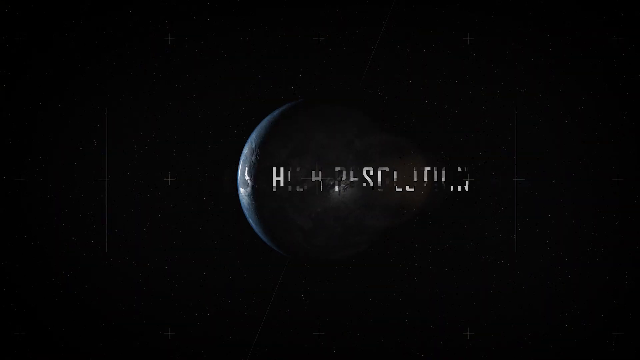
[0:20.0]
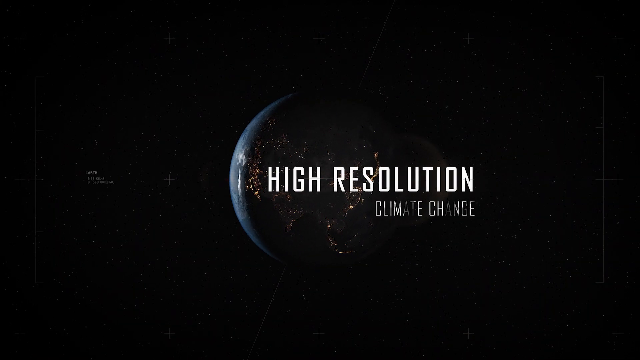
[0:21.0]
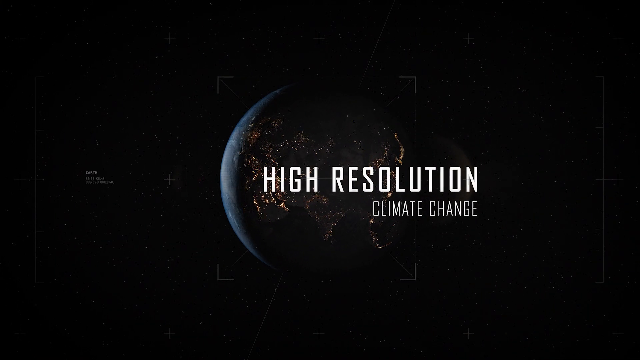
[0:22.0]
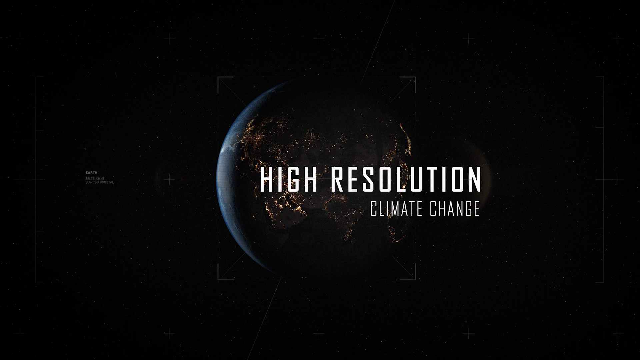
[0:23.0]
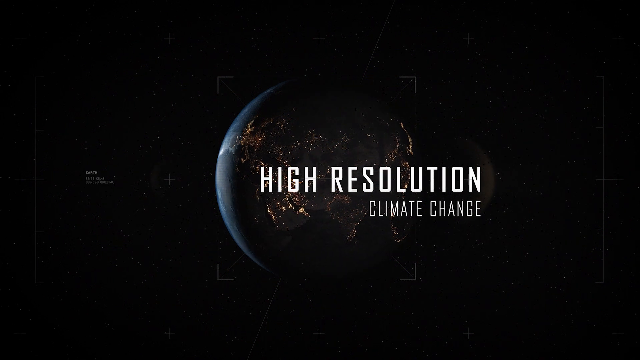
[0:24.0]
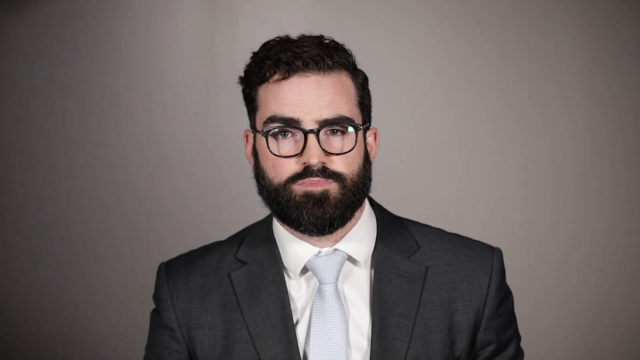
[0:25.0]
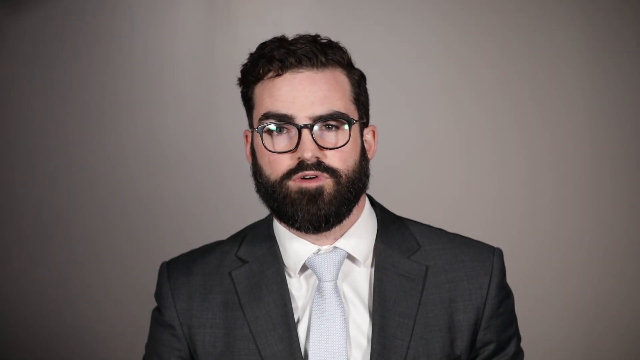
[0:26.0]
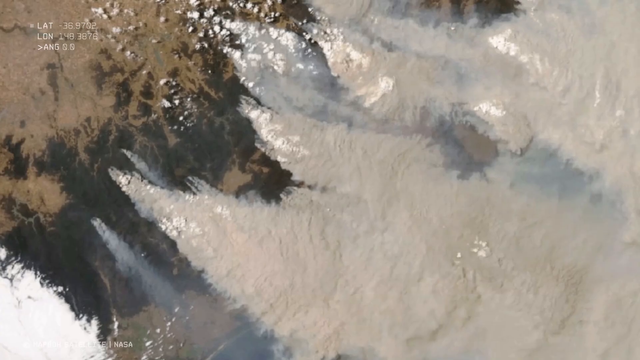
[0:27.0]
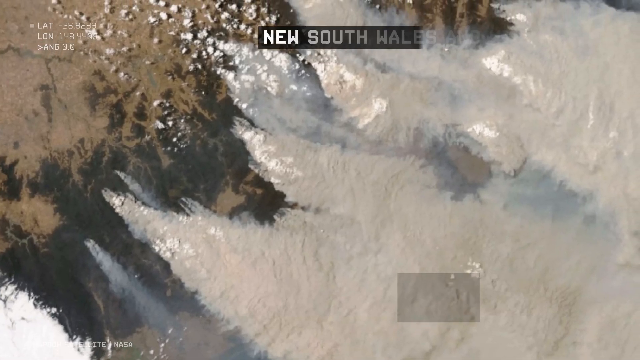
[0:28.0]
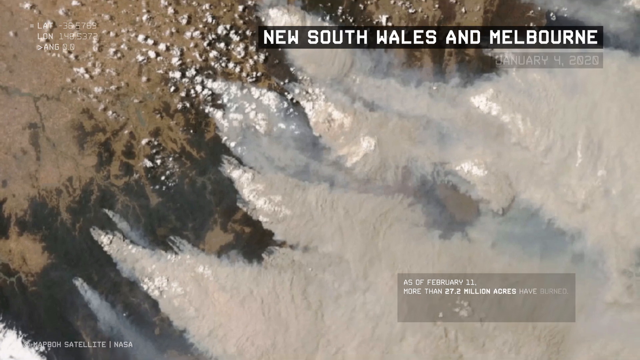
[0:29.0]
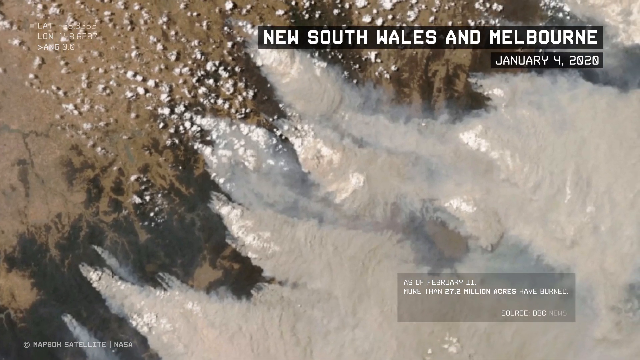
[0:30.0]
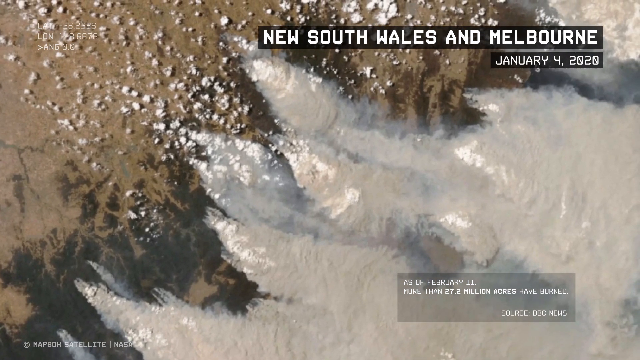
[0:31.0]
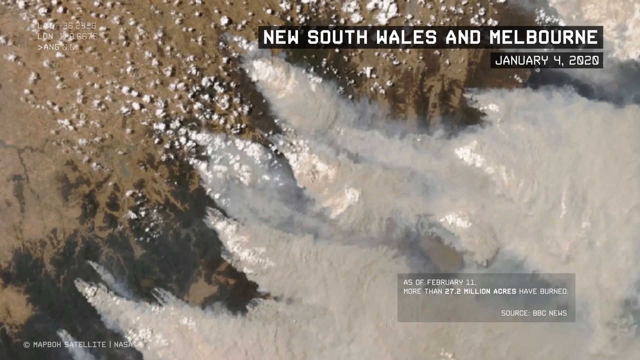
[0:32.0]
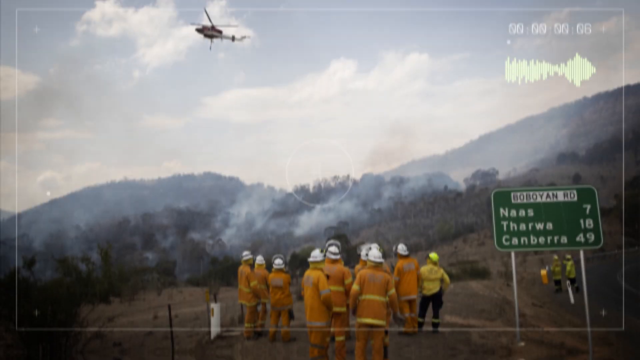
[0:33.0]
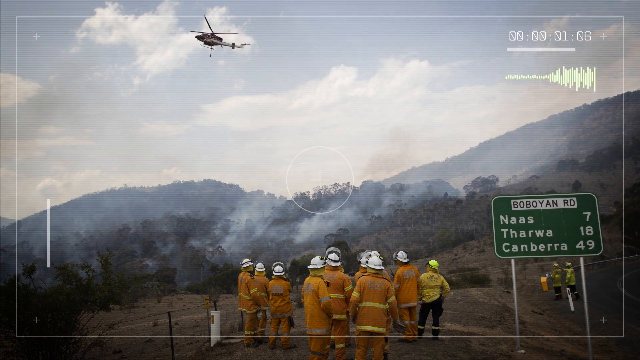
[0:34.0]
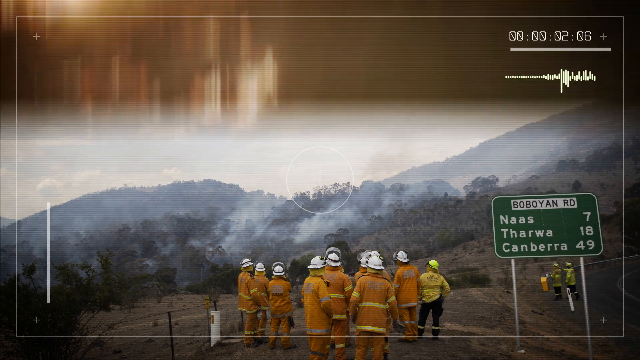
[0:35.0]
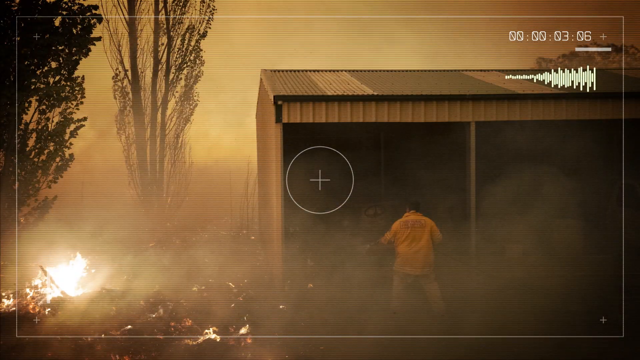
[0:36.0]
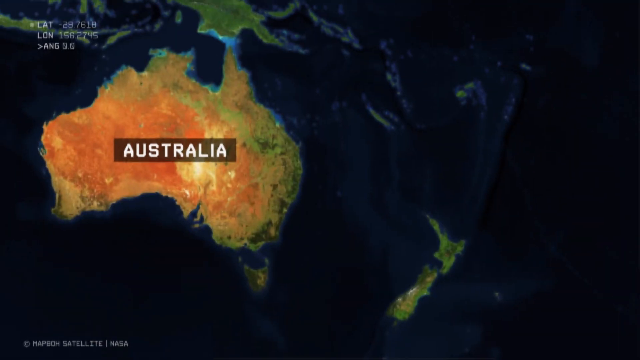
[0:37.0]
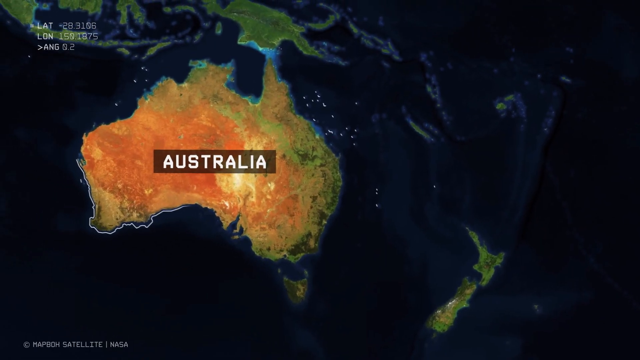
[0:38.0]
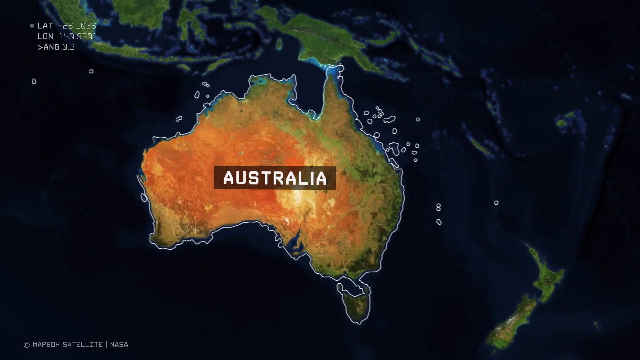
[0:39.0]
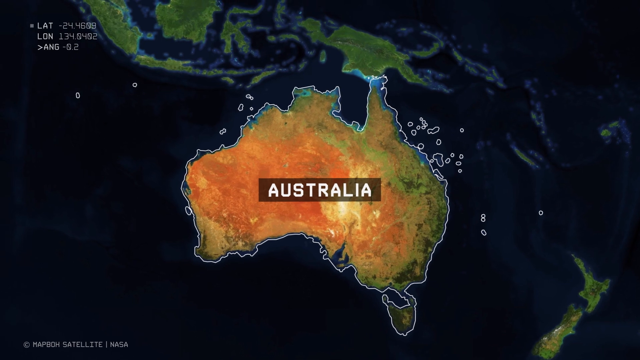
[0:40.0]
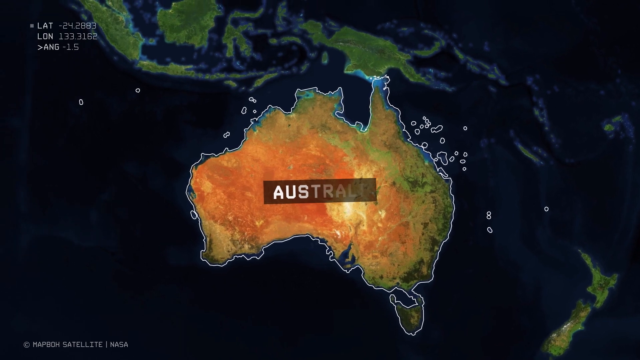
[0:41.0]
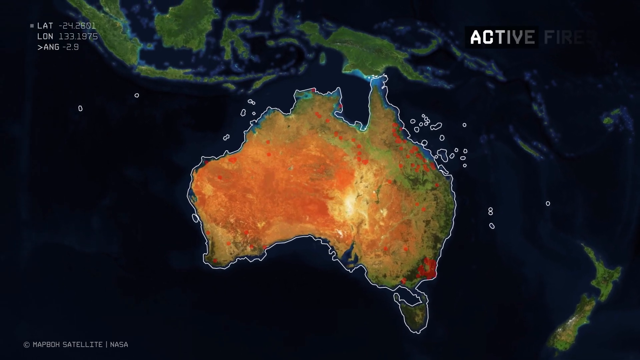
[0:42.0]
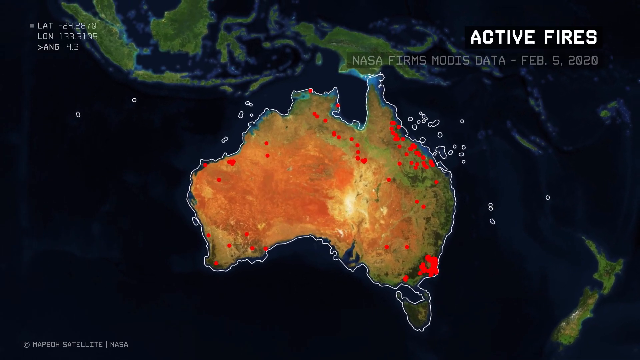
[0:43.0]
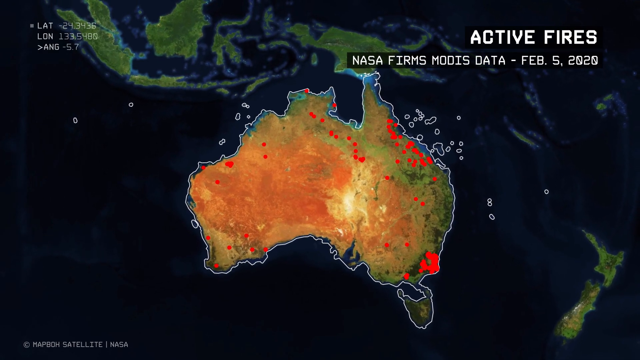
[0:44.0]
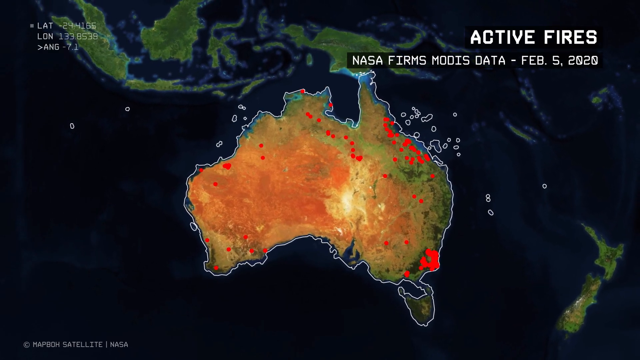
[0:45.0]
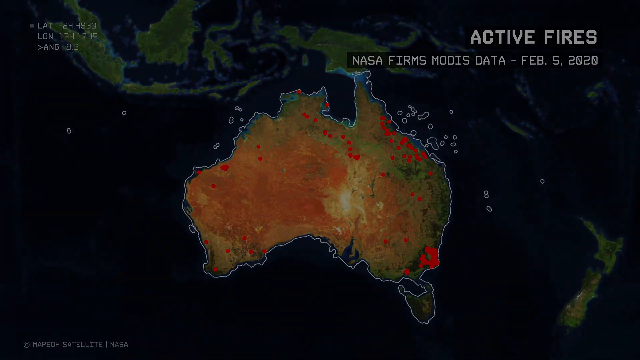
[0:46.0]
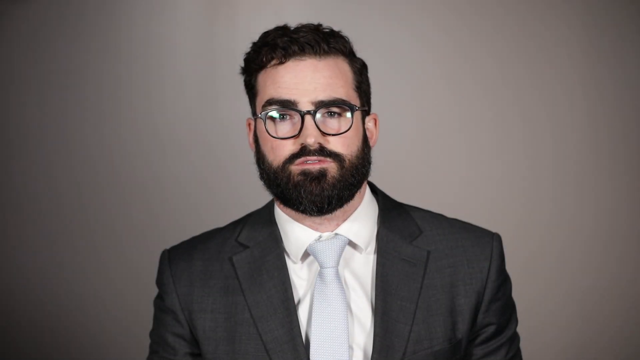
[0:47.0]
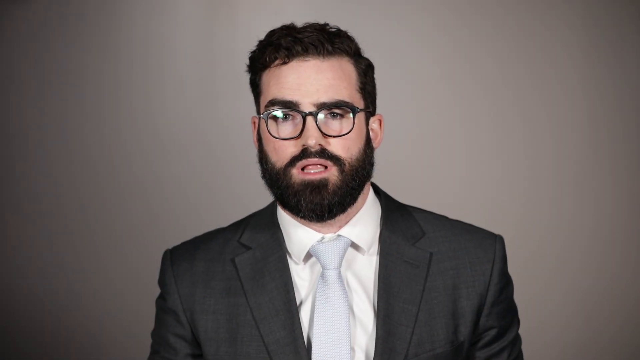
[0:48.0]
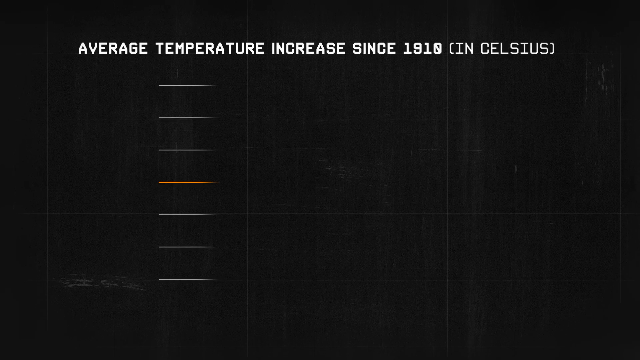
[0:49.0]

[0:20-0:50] New South Wales and Melbourne are shown in a picture taken on 4 January 2020, along with the figure that as of February 11, more than 27.2 million acres have been burned. A group of firefighters stands next to a boat looking up at a helicopter in the air. Distances are given: Nass 7 kilometres, Tarwa 18 kilometres and Canberra 49 kilometres from where they are. A house full of smoke appears with a person standing in front, as if trying to enter, or maybe trying to pull out someone or something. A map of the Australian continent follows, with the text "active fires" and a date of 5 February 2020. Lachlan Carey appears again, and then the world map is shown again.